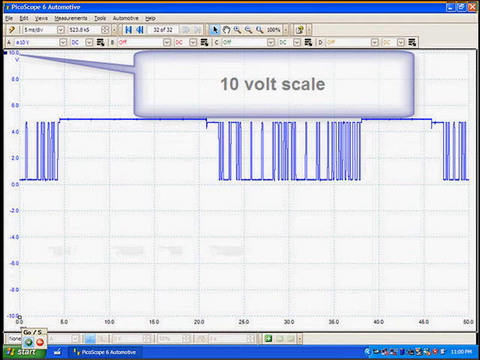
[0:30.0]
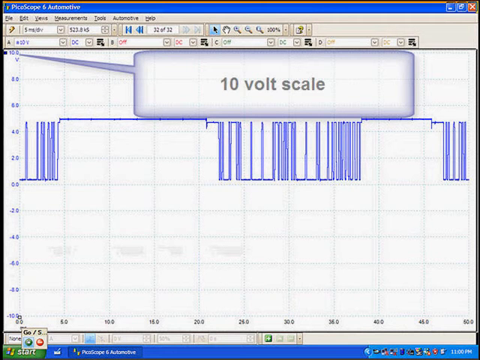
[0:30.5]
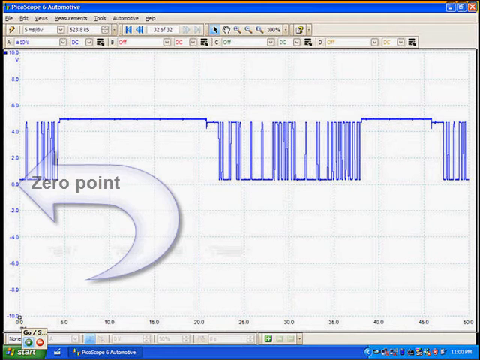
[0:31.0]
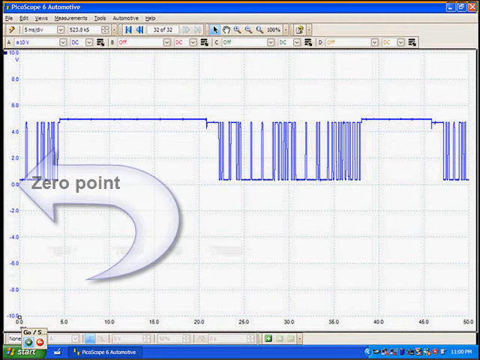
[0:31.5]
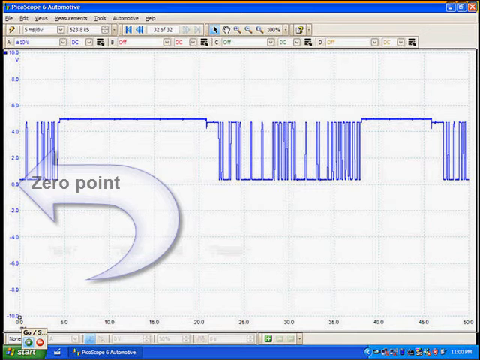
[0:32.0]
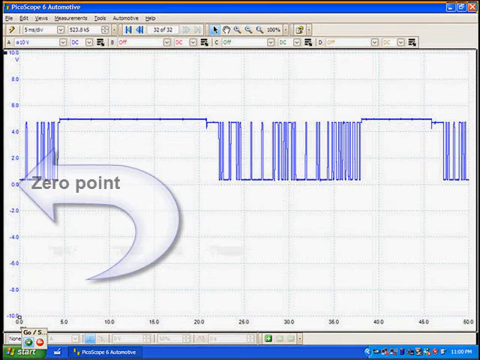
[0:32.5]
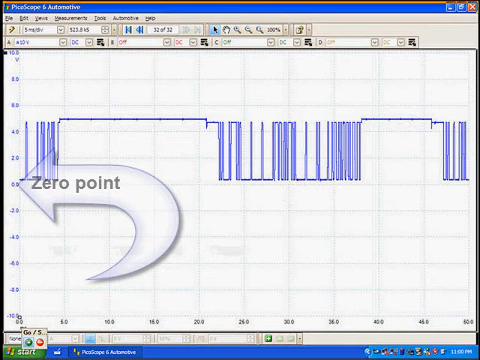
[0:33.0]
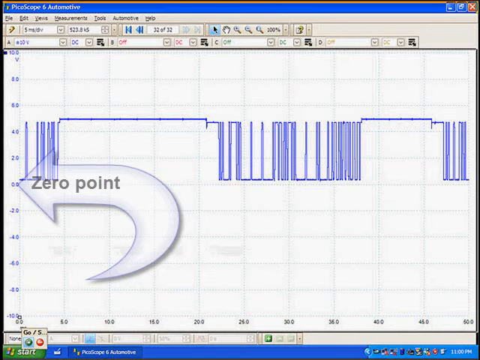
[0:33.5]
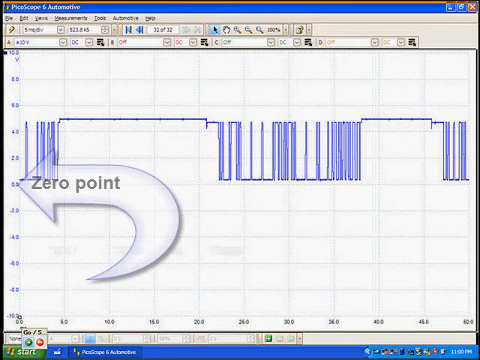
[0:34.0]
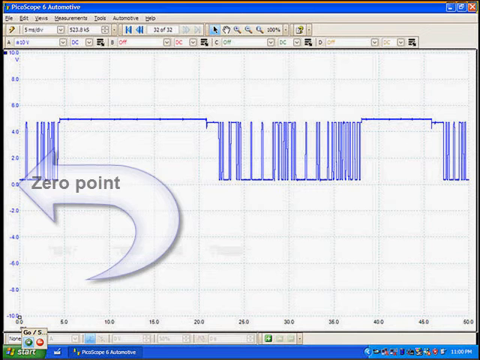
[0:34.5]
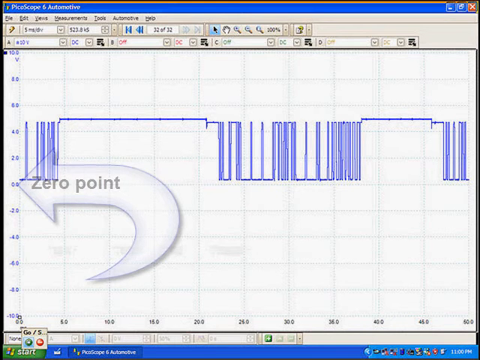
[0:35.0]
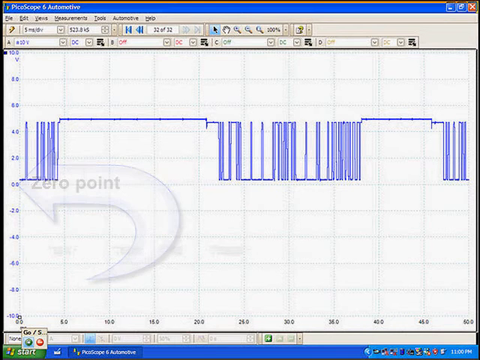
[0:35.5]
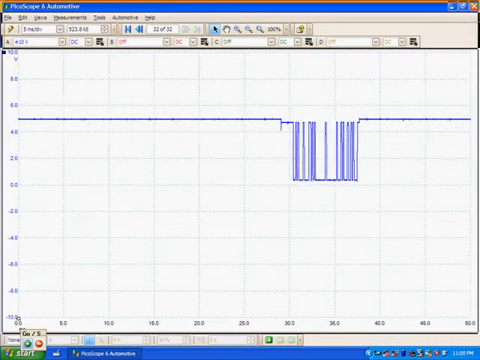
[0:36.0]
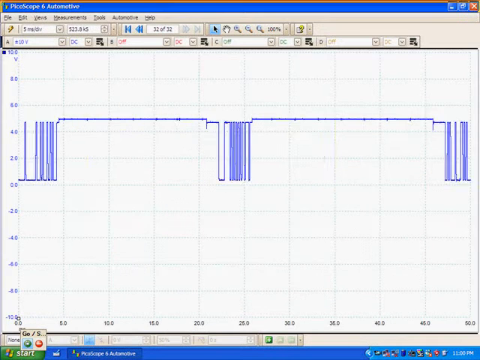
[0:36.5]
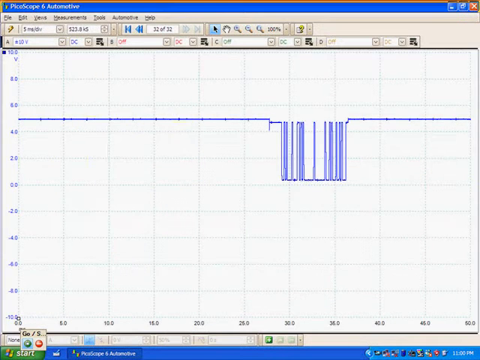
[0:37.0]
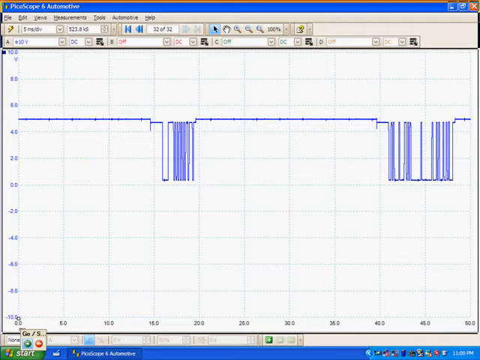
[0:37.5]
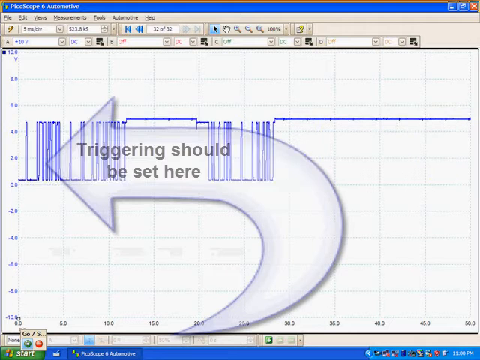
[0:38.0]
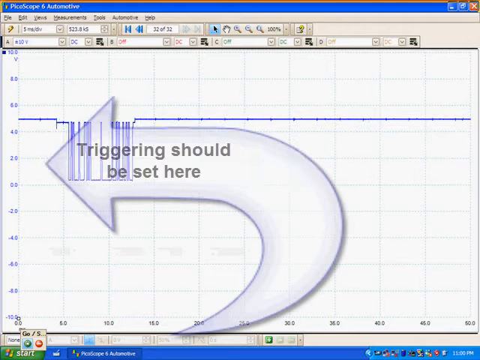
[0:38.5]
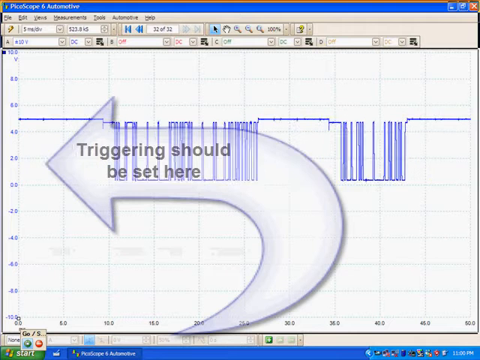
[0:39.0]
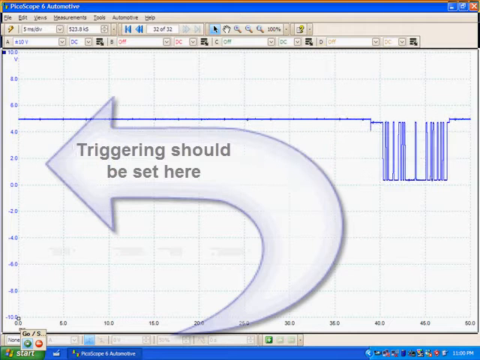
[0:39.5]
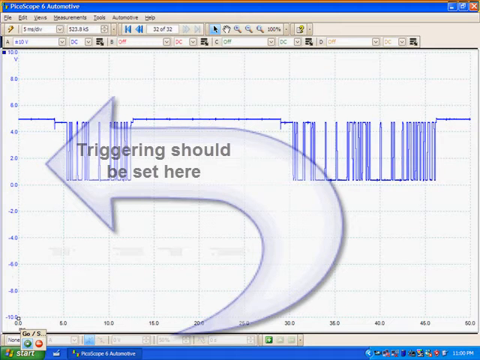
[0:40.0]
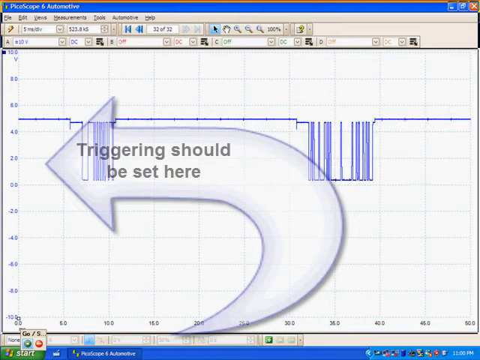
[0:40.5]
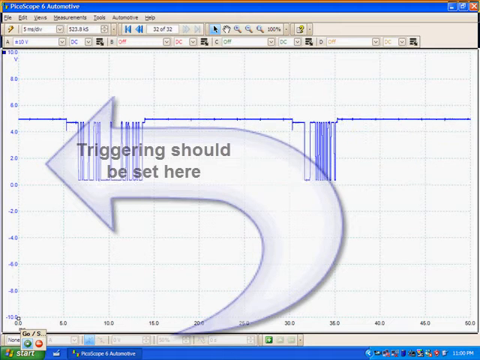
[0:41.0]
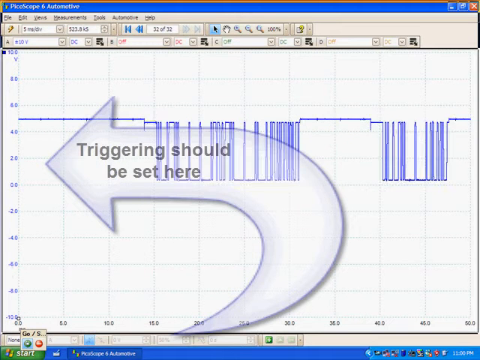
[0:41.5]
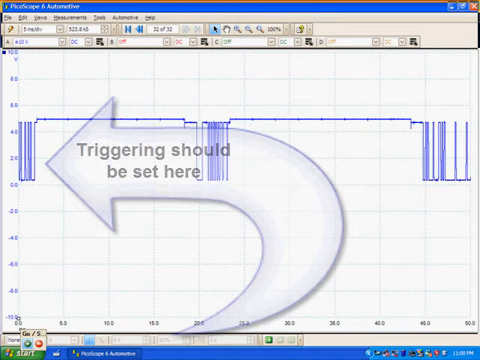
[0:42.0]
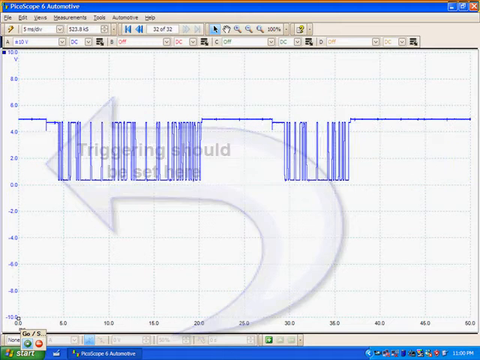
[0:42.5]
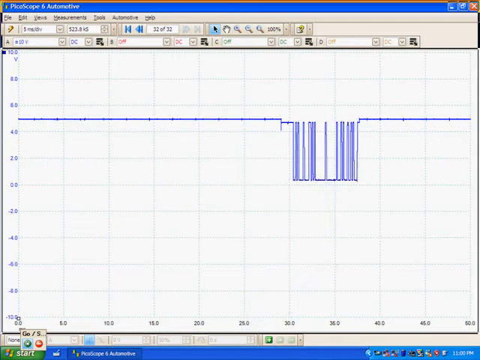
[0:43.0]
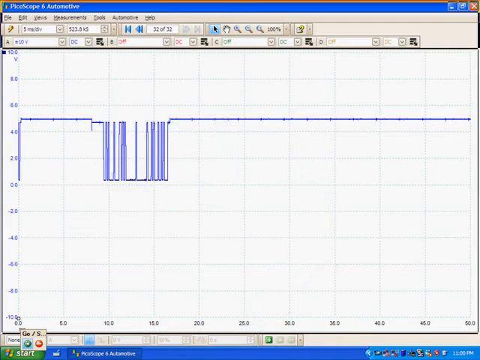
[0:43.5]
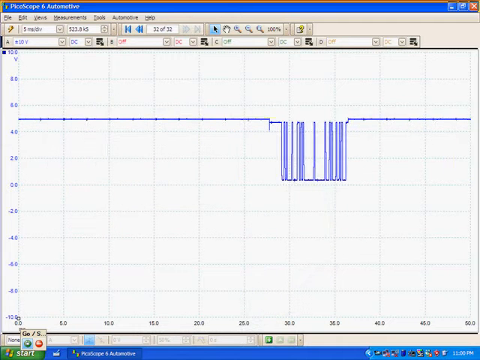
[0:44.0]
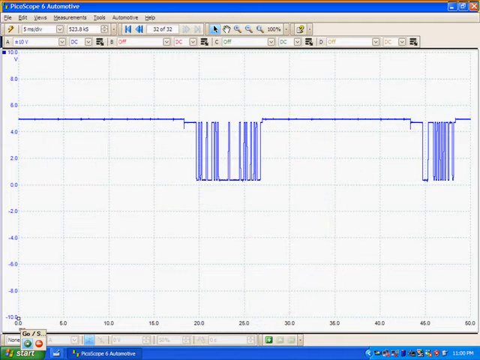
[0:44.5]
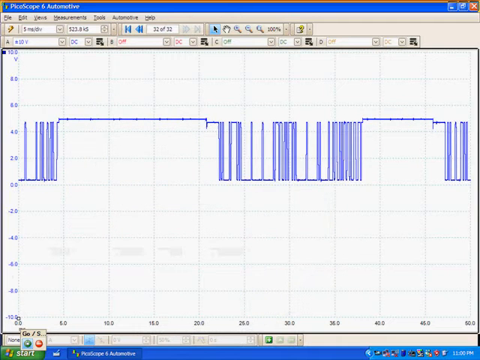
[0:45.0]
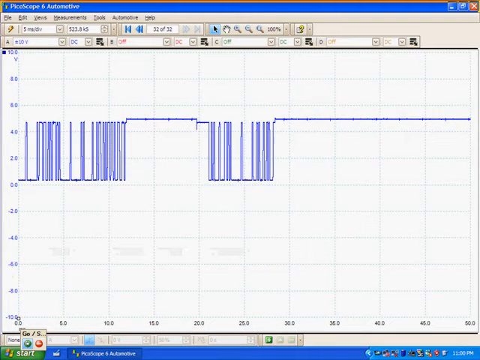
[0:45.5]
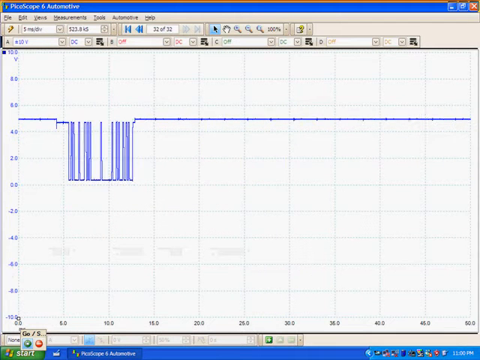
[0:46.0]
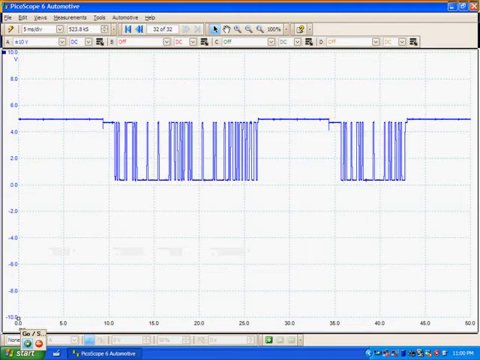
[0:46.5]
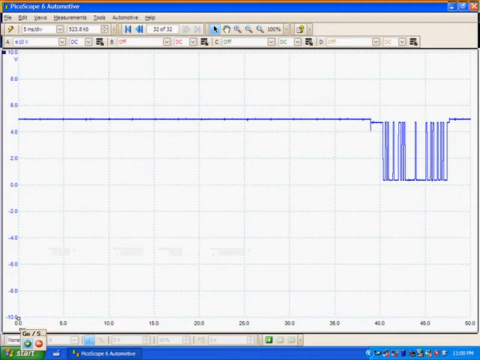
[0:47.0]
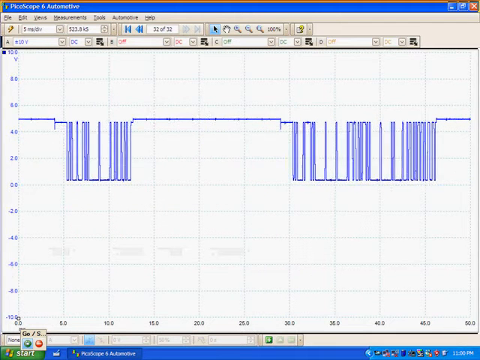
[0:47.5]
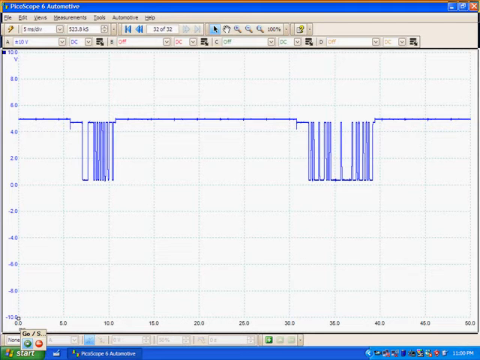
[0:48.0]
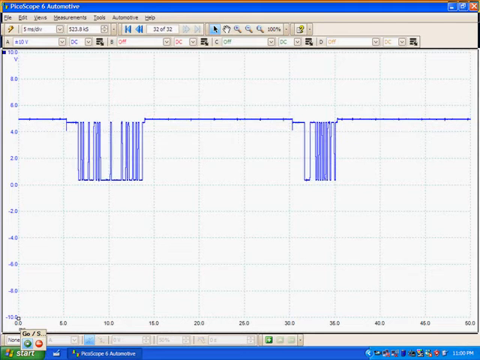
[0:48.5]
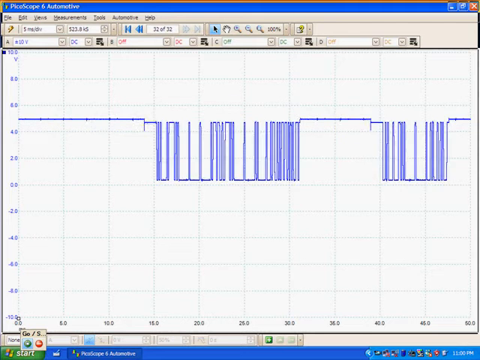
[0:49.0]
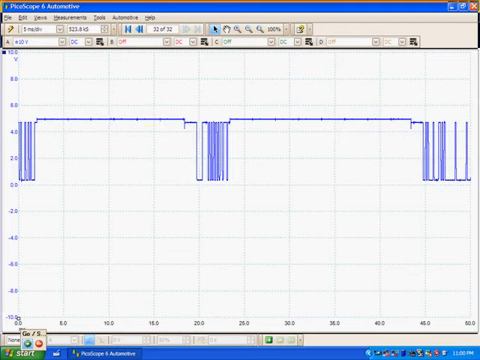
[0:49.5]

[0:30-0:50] Another overlay appears that reads "zero point," marking the middle part of the chart, the chart's zero point. The blue lines of the chart go flat and horizontal, then dip down vertically and back up vertically again, and all of them are above the zero point. The program, PicoScope 6 Automotive, runs on a Windows computer, and the toolbar at the bottom of the screen shows it is the only window open. Multiple drop-down menus run across the top beneath the very top toolbar, and there are other options with sliders, plus a magnifying glass to enlarge or shrink the chart or return it to center or 100 percent. The chart has a bunch of blue lines in its center, all above the zero point on the scale.